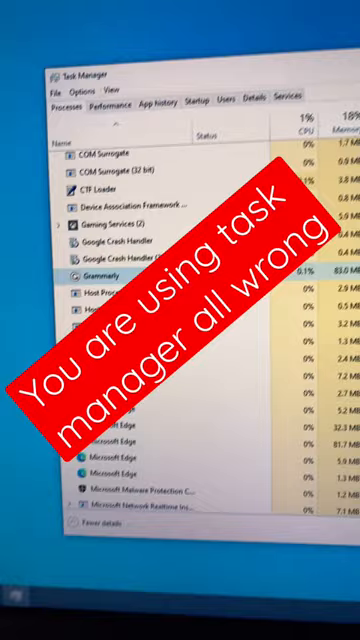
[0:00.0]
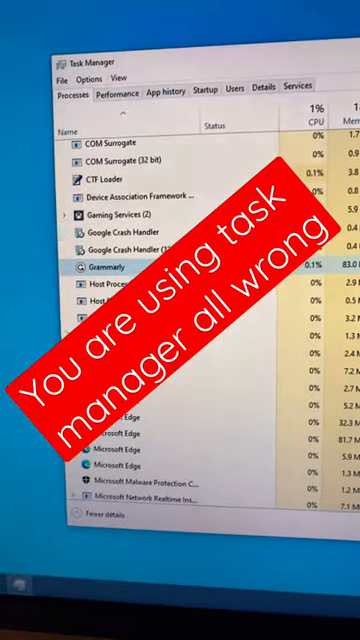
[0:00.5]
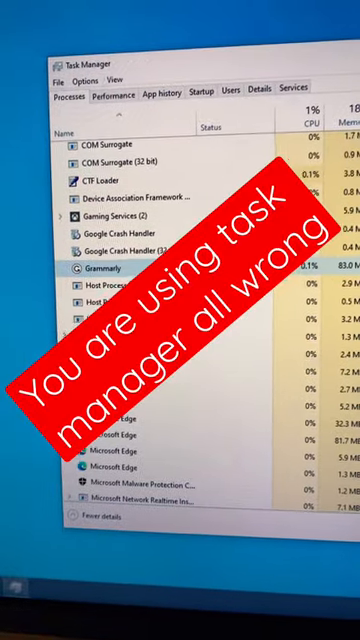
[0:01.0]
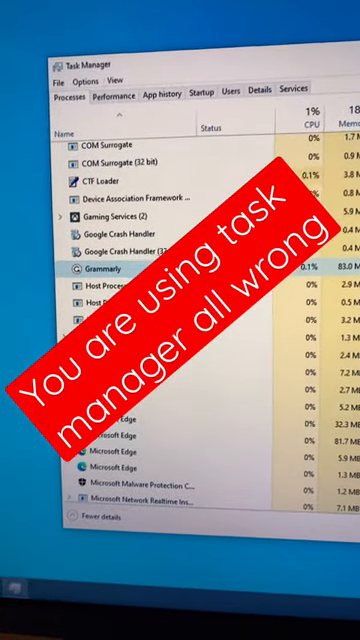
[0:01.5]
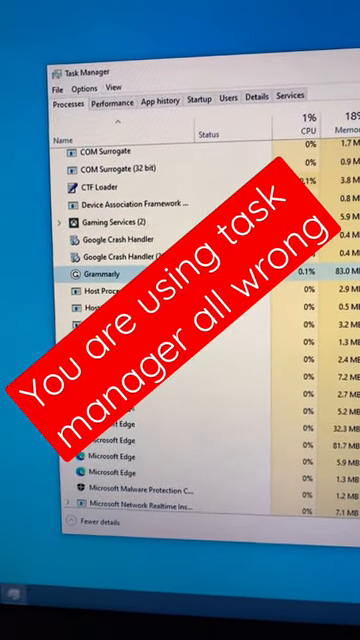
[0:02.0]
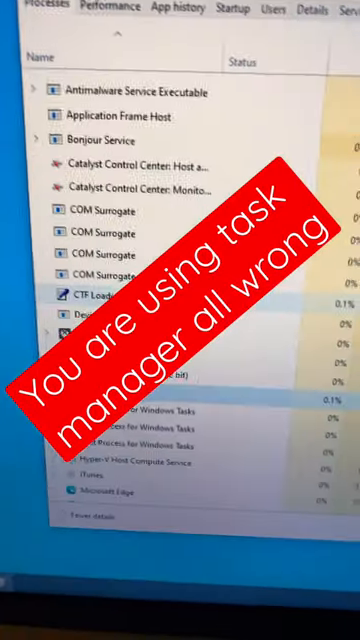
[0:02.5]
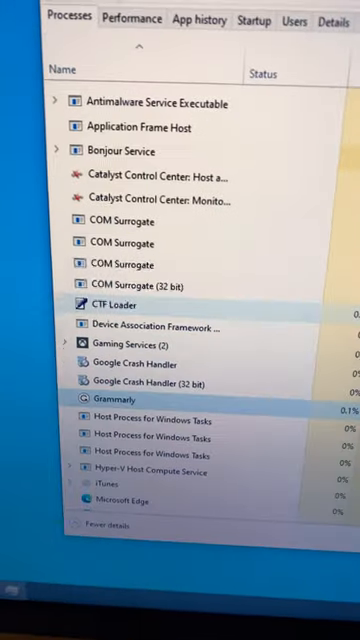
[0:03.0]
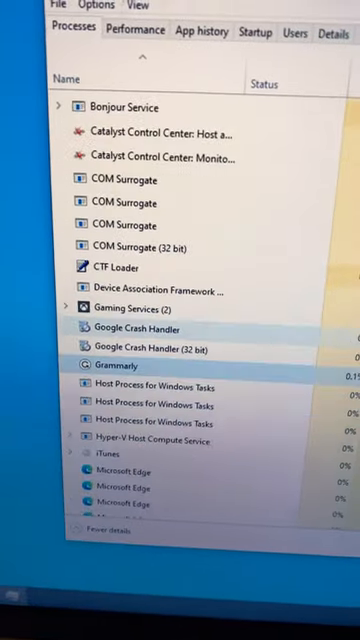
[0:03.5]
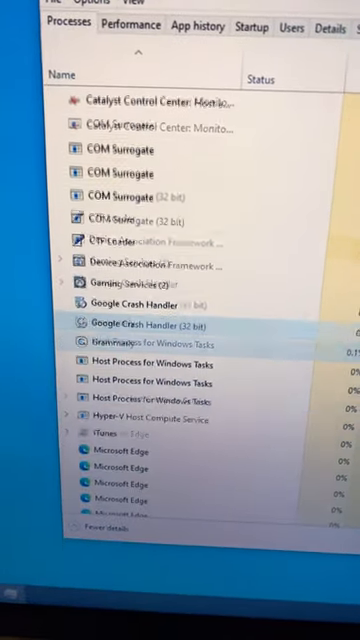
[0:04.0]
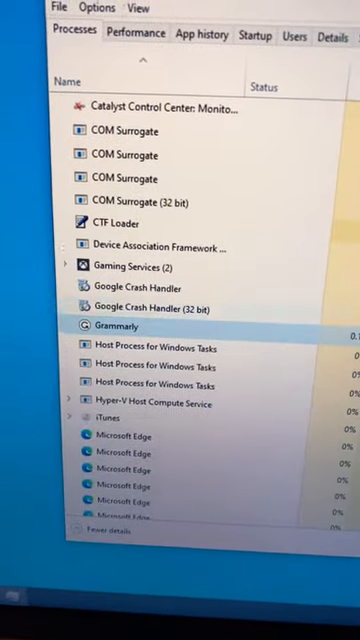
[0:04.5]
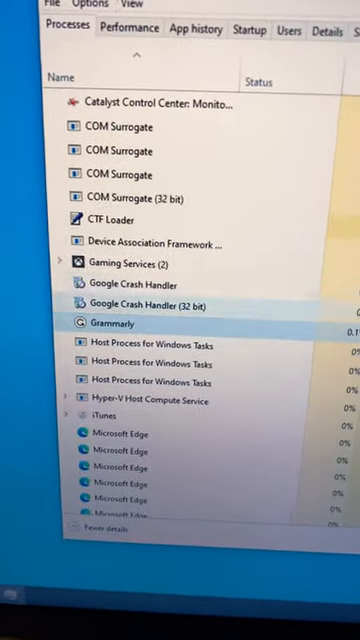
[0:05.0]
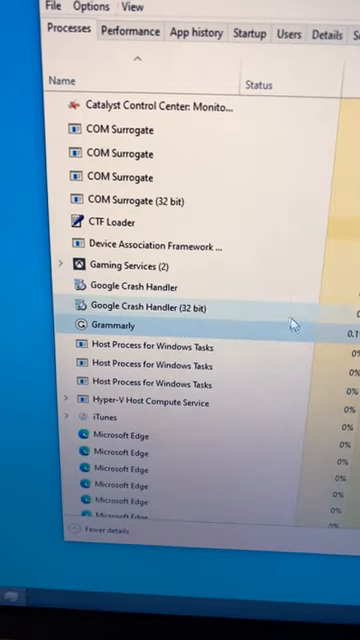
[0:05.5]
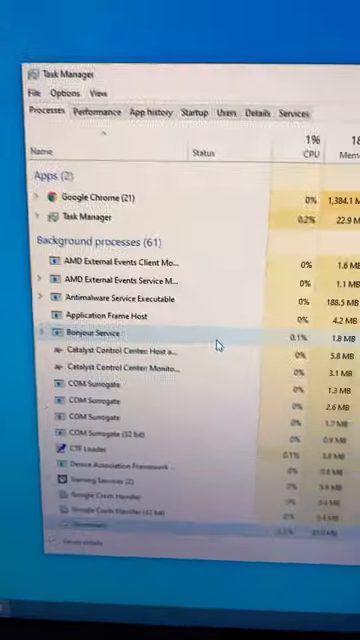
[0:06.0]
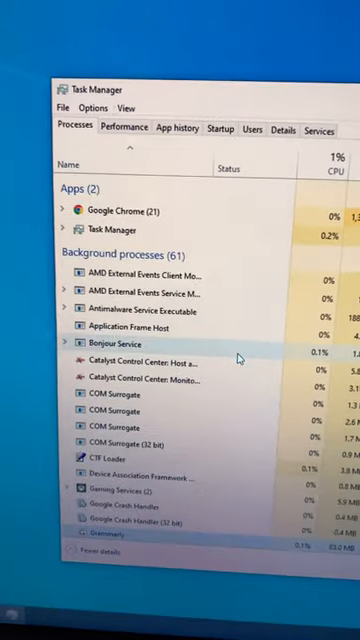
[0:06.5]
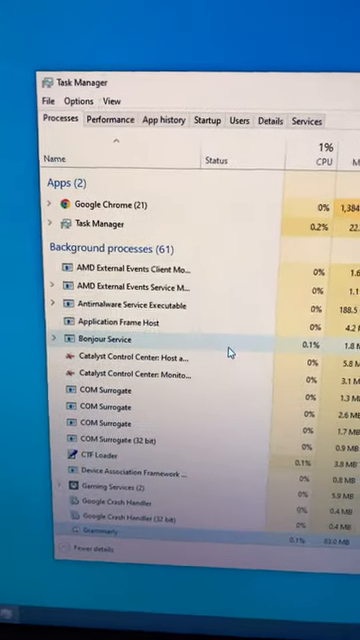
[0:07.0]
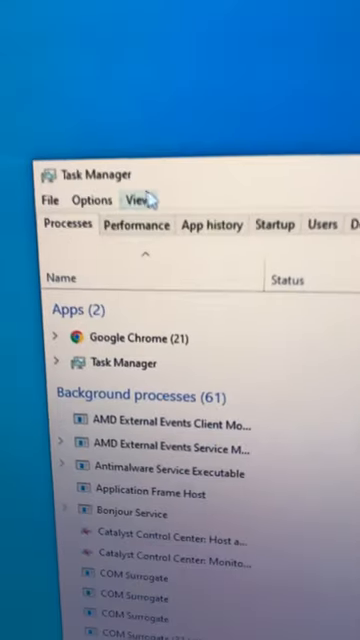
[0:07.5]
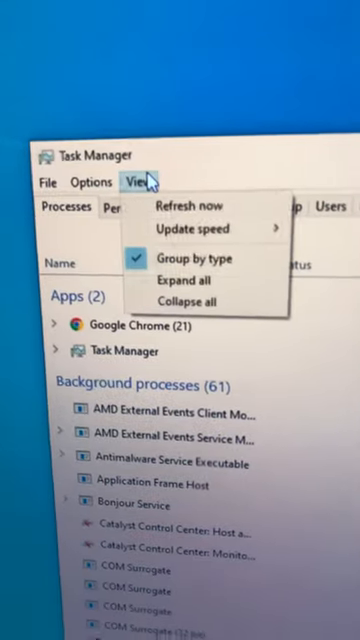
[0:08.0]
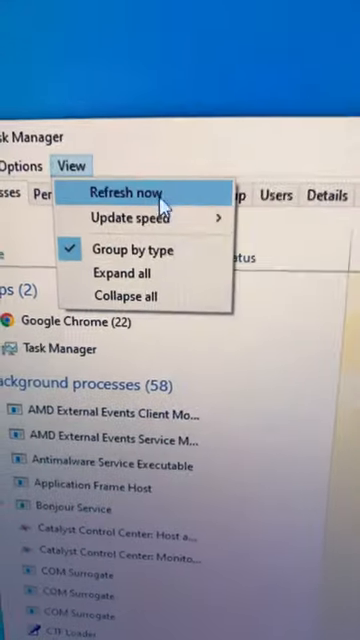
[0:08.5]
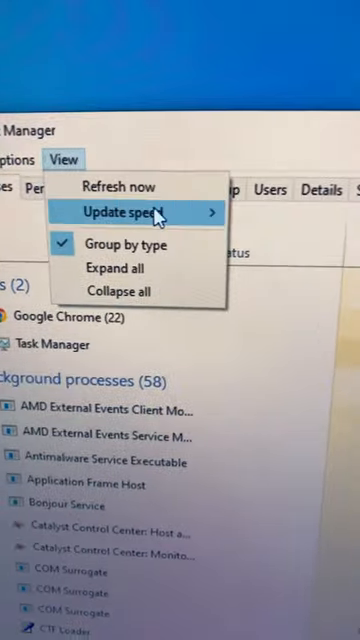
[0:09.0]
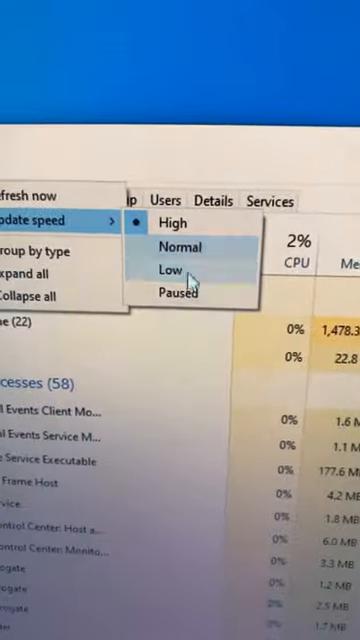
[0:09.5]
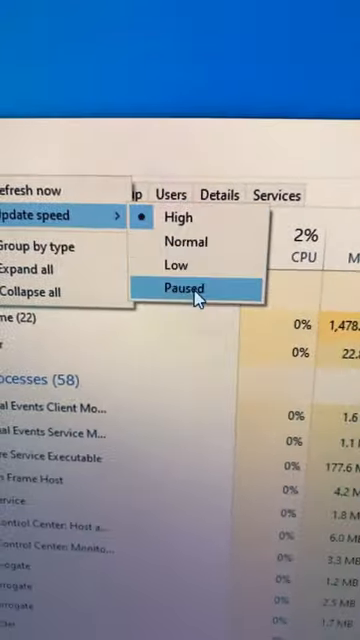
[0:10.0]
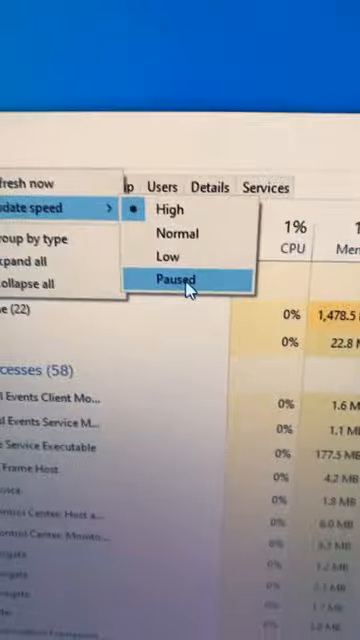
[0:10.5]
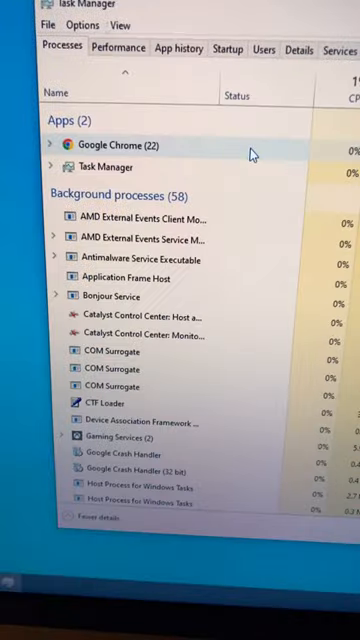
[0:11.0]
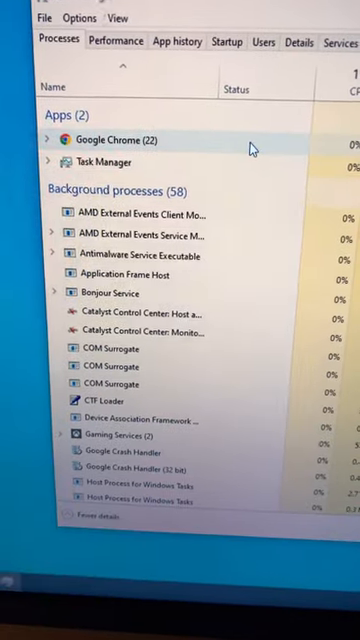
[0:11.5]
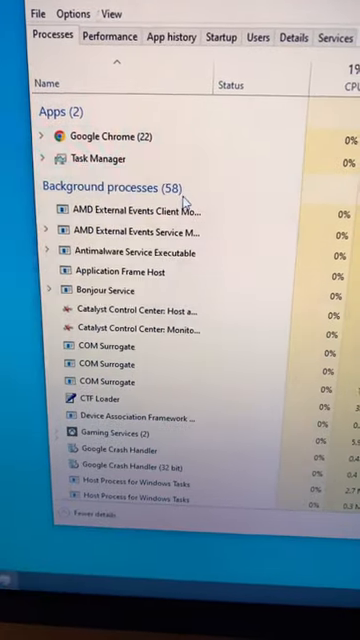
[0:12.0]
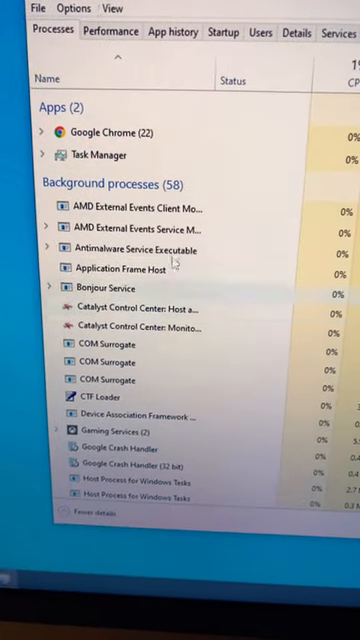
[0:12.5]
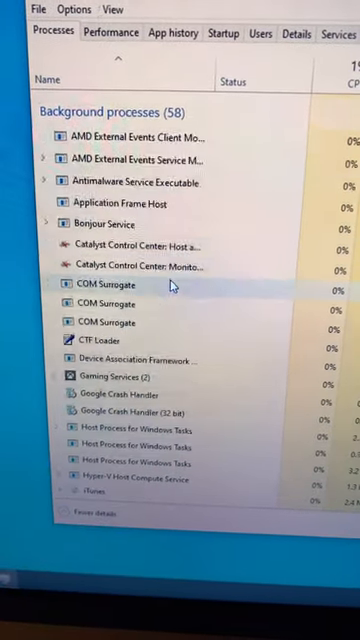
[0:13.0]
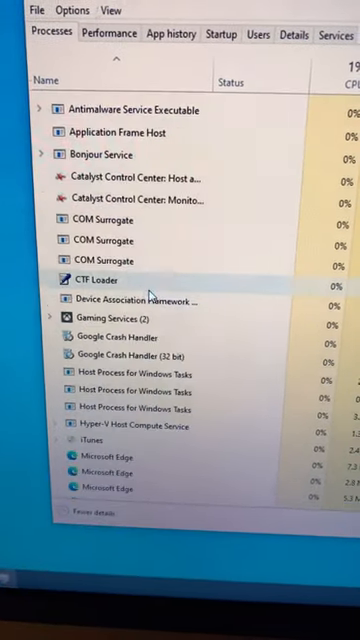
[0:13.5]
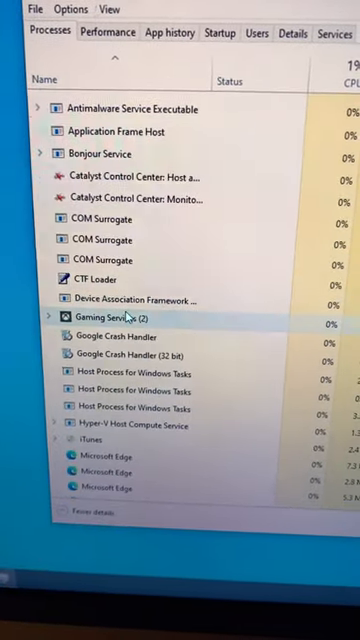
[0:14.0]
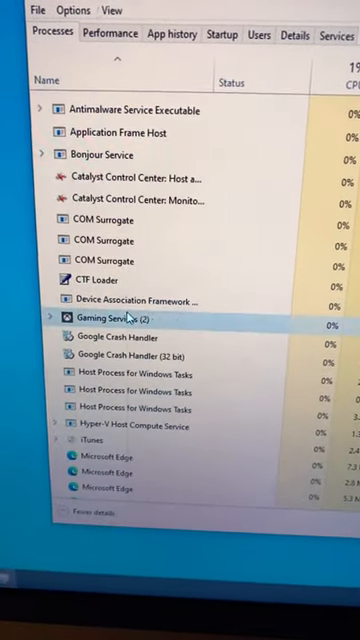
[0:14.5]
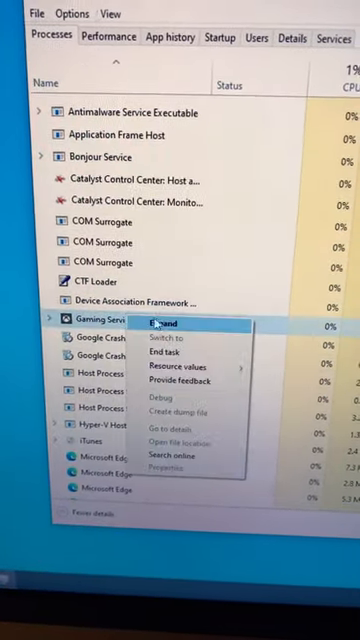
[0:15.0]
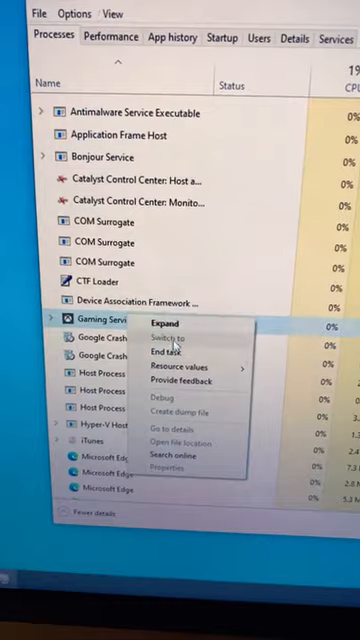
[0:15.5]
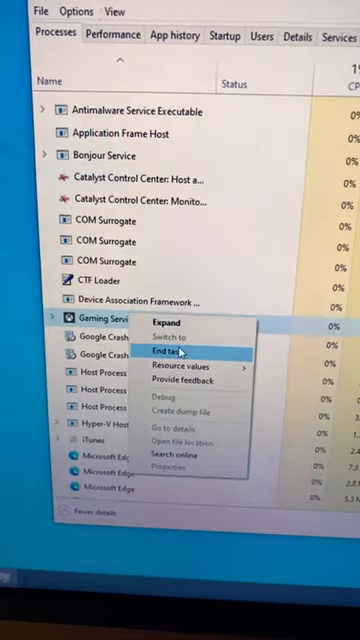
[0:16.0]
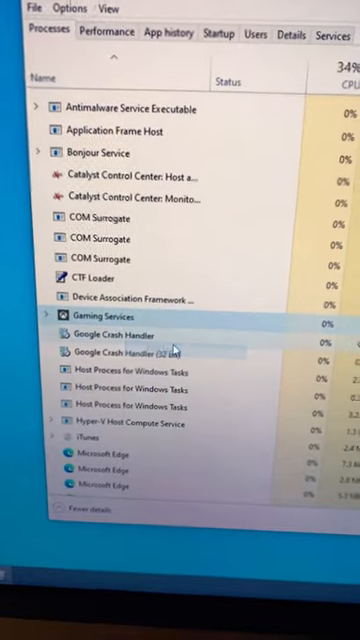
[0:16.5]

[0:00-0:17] Part of a computer screen is shown with Task Manager open. A man shows the View menu and the different apps on the computer, and then text reads "You are using task manager all wrong." It looks to be a tutorial on the proper settings and how to make the most of Task Manager. He goes to View and to gaming services; under View he sets it to be paused, and he sets the gaming service to end. It might be a tutorial on using Task Manager to speed up the computer and make it more efficient.